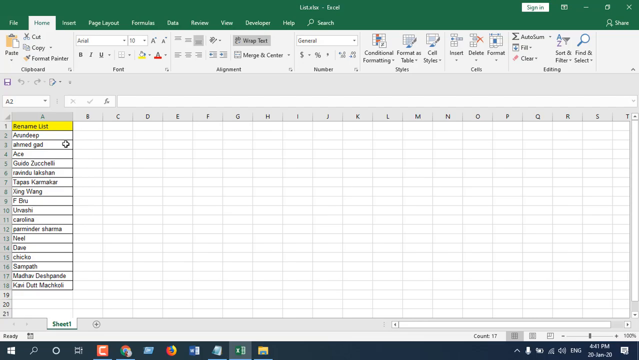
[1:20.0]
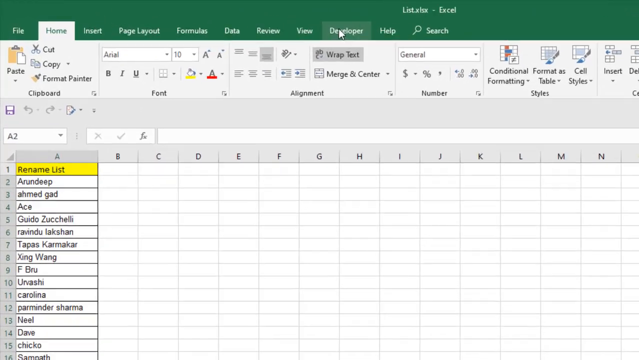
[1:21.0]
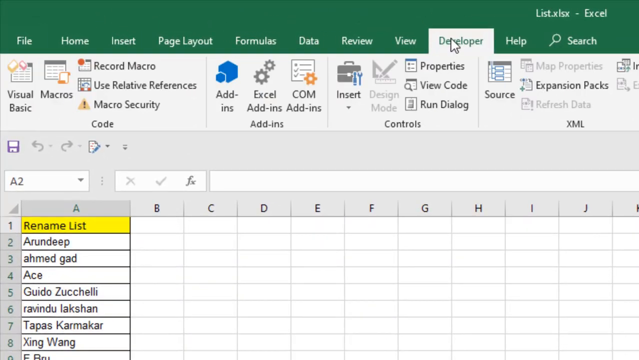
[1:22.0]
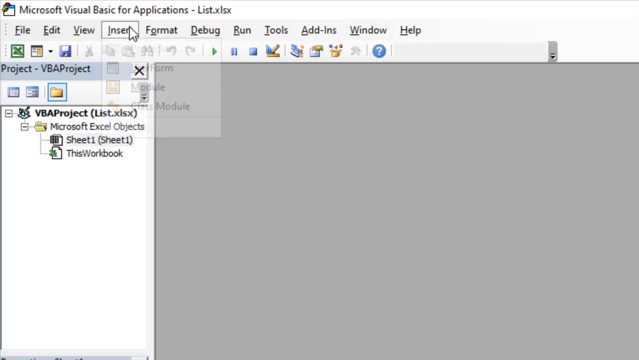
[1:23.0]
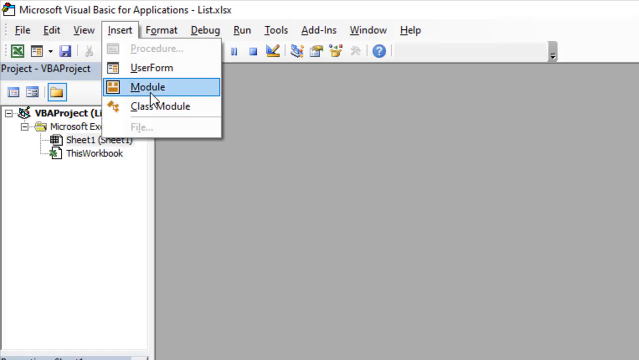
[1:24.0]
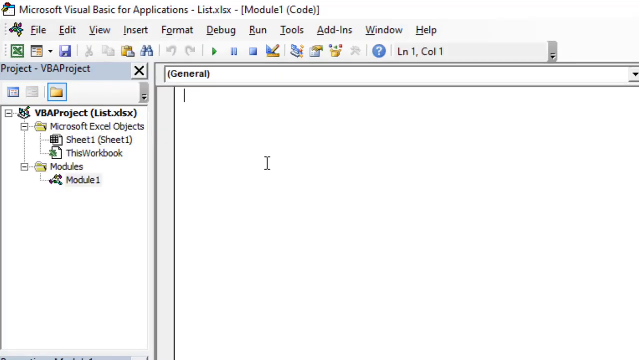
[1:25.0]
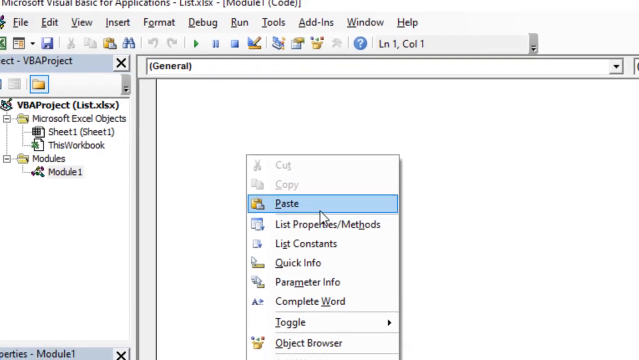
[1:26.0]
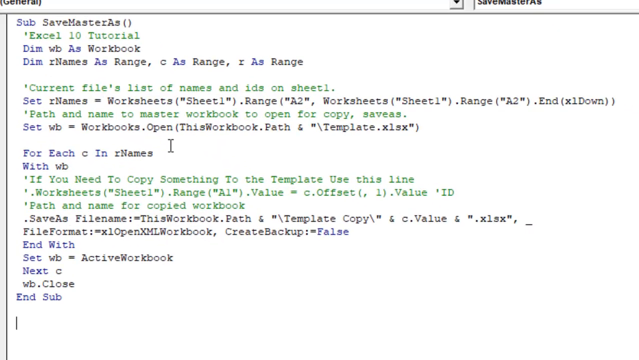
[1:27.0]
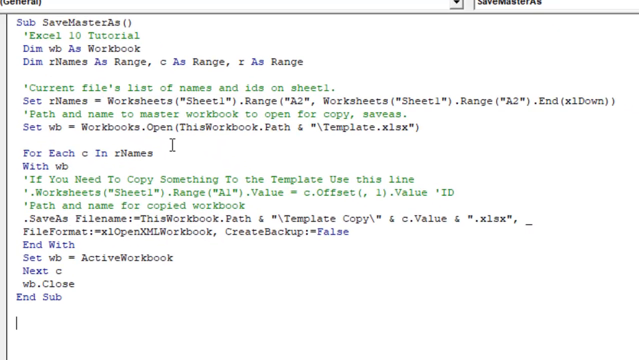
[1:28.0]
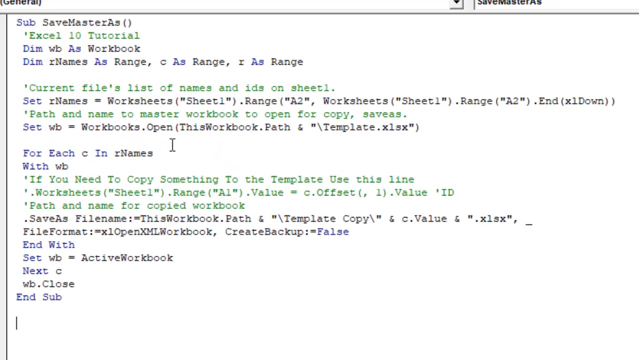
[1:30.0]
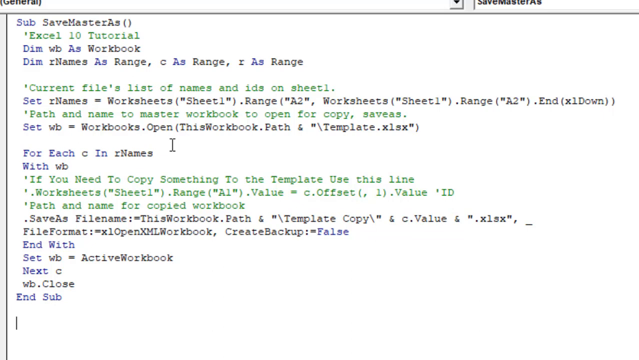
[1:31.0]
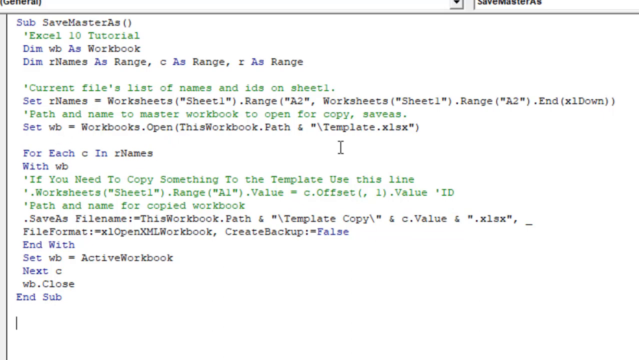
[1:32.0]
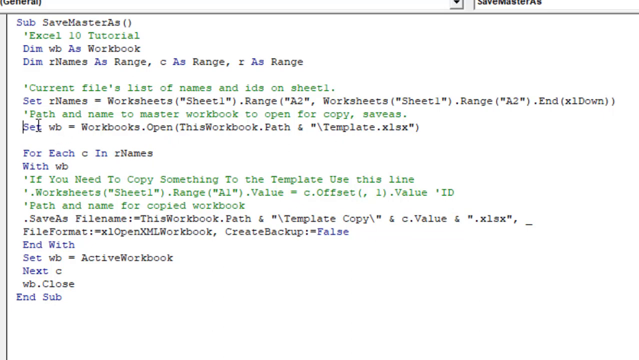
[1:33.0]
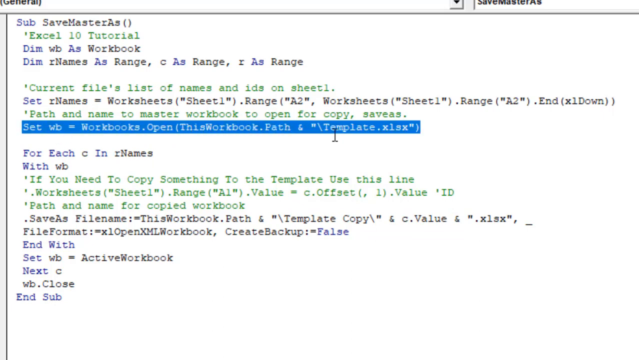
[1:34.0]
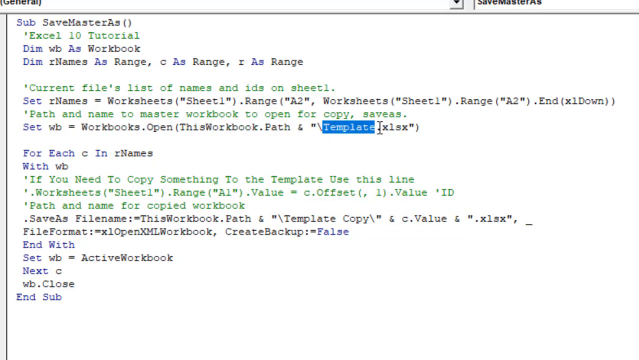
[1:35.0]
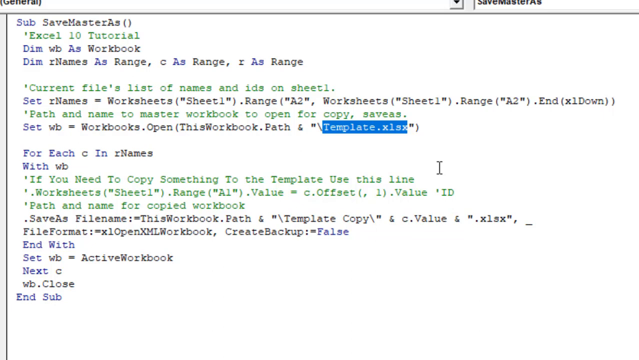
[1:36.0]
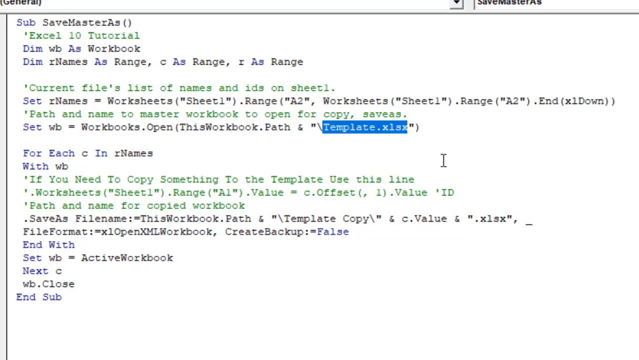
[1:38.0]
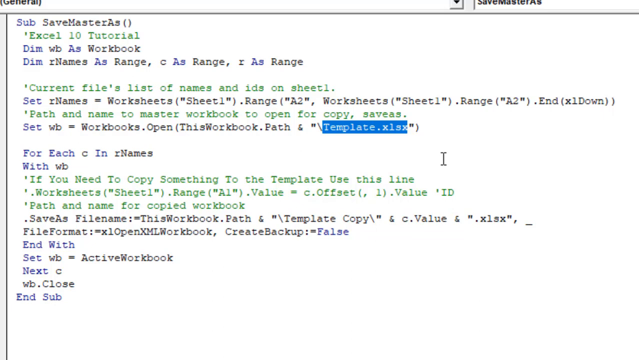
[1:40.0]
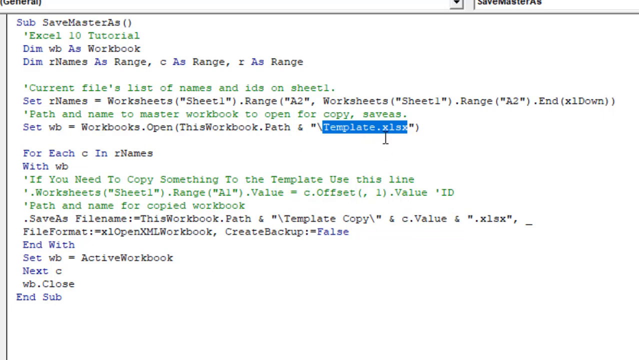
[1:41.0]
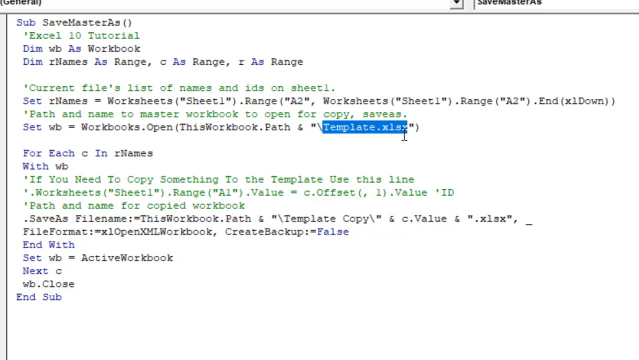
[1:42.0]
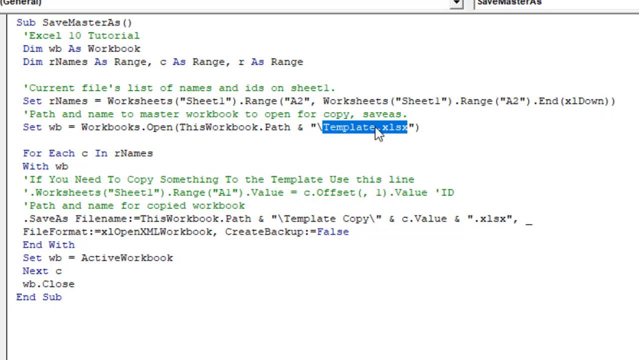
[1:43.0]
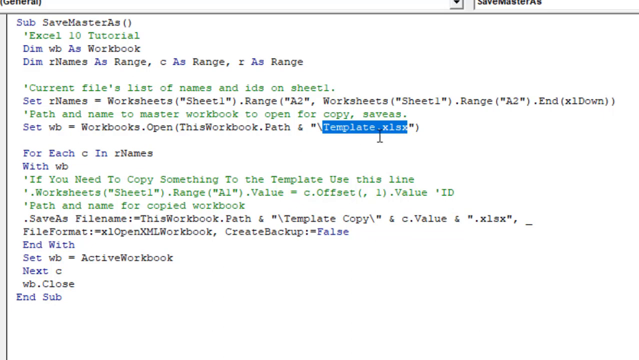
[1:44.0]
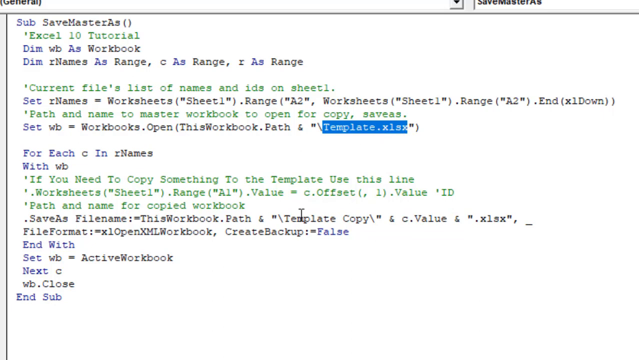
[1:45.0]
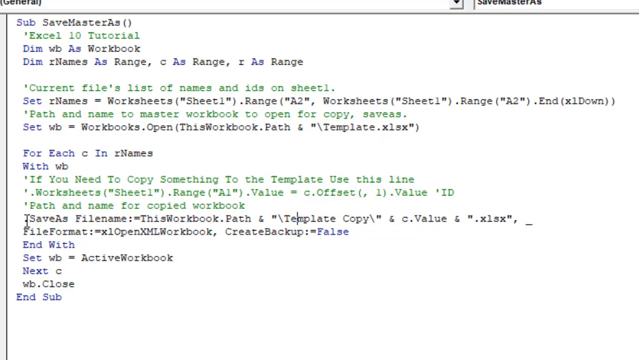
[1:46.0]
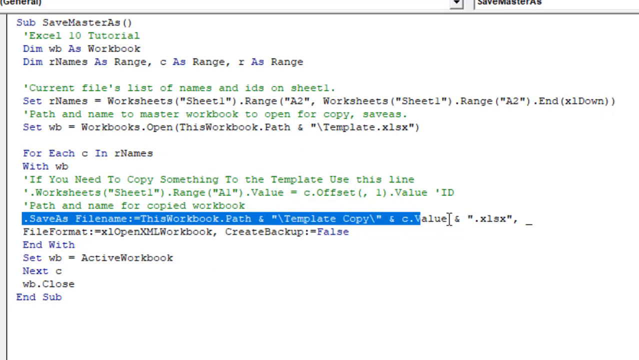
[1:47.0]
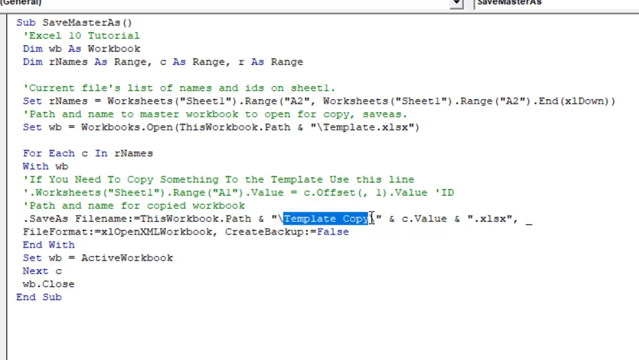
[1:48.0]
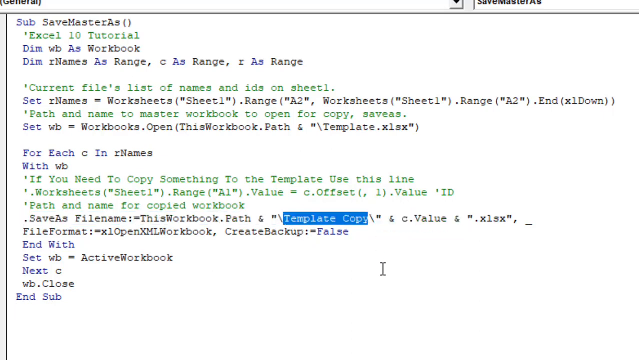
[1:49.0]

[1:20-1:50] With all the lists shown, the view zooms into the tabs at the top: File, Home, Insert, Page Layout, Formulas, Data, Review, View, Developer, Help, and Search. The mouse clicks the Developer tab, revealing many different options, and hovers over the first one, Visual Basic, which has a line wrap and a pink and yellow square next to it. Microsoft Visual Basic for Applications opens; Insert is selected, the menu is scrolled down to Module, Module is selected, and a right-click and Paste fill the module with a block of code. The code includes declarations such as "dim R names as range", a comment in green about the current file's list of names and IDs on sheet 1, and references to worksheets sheet 1, range A2.